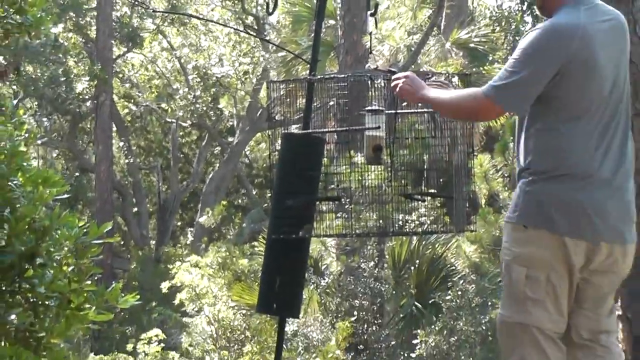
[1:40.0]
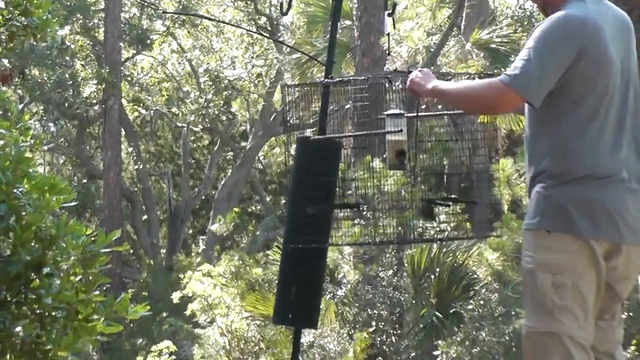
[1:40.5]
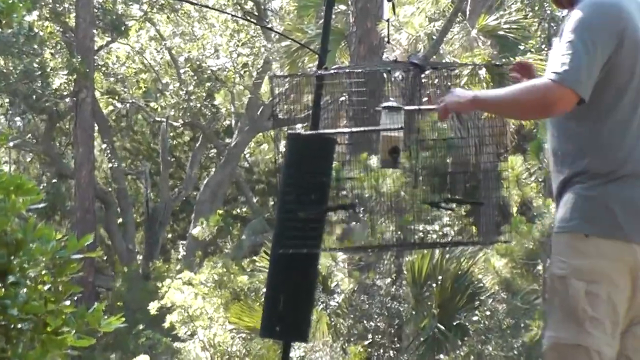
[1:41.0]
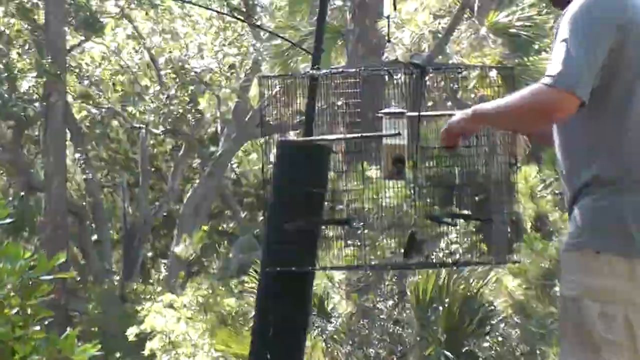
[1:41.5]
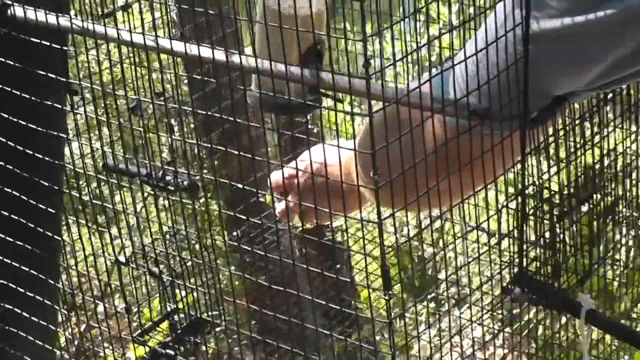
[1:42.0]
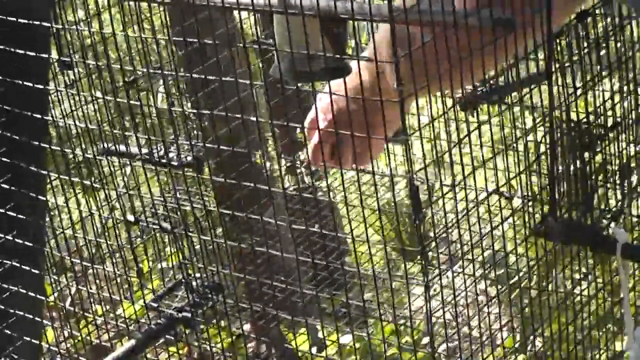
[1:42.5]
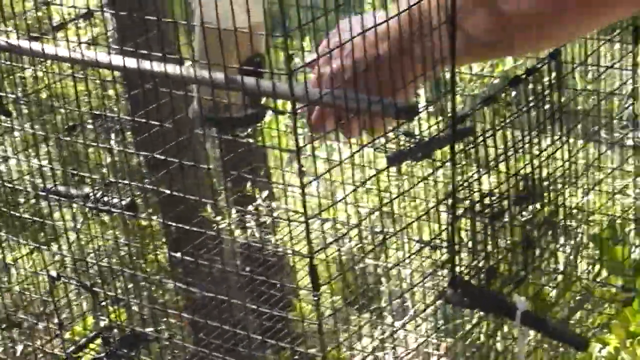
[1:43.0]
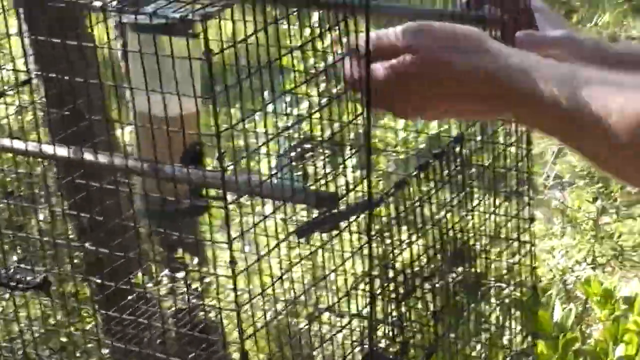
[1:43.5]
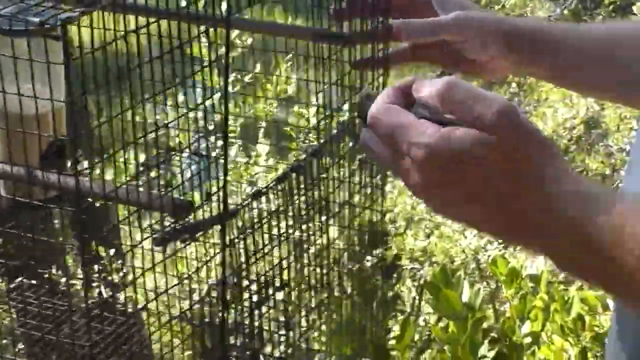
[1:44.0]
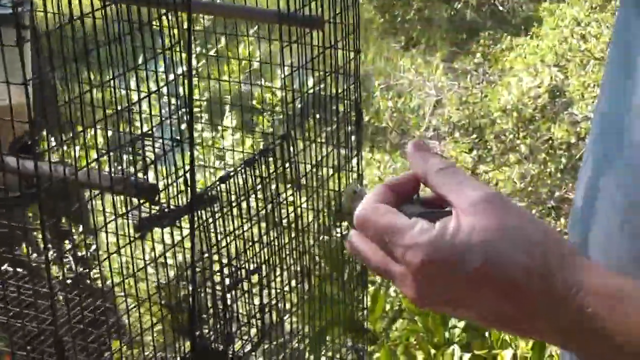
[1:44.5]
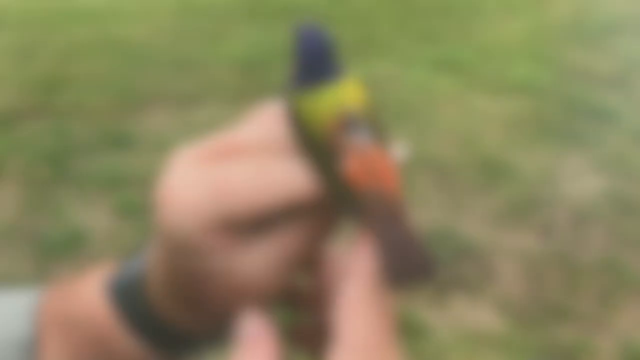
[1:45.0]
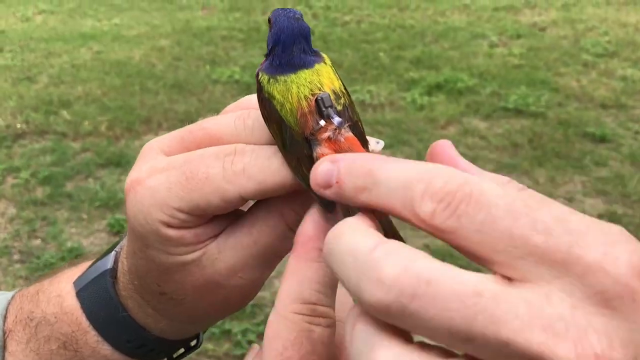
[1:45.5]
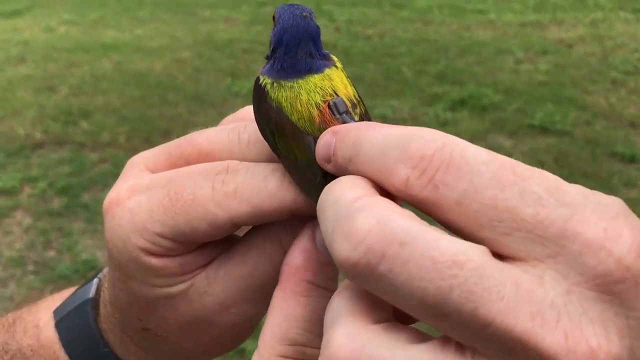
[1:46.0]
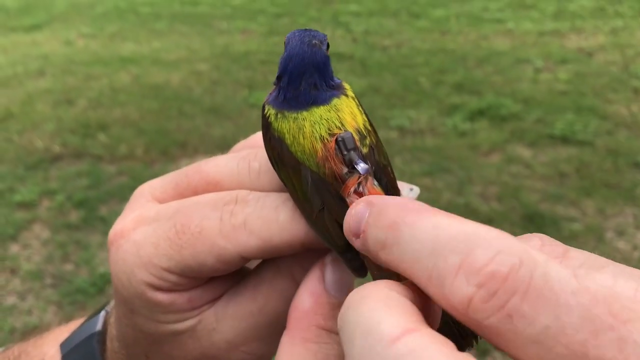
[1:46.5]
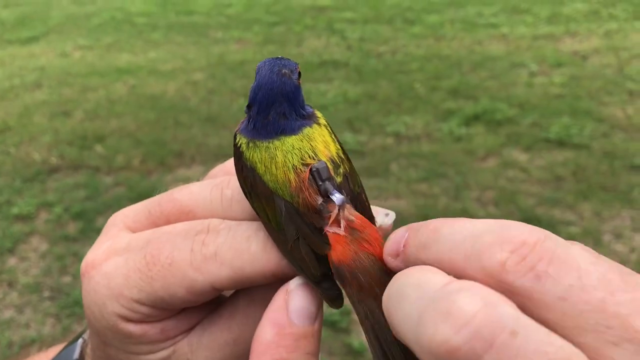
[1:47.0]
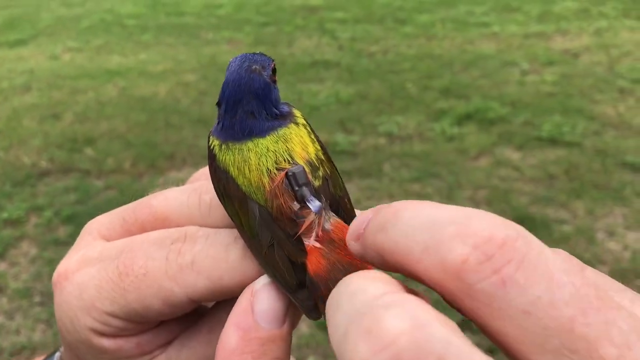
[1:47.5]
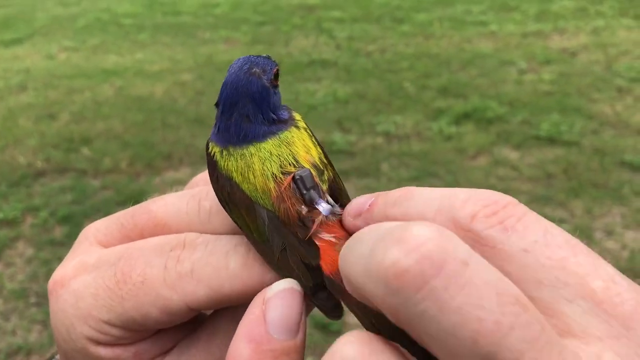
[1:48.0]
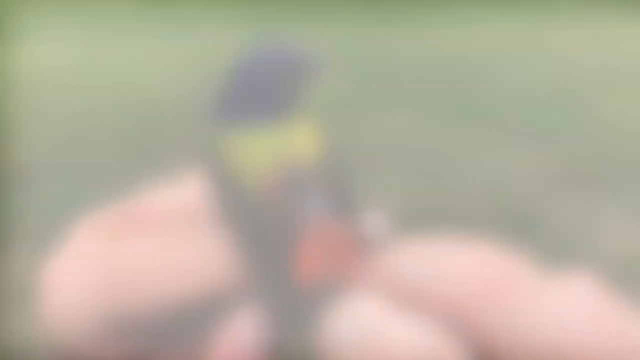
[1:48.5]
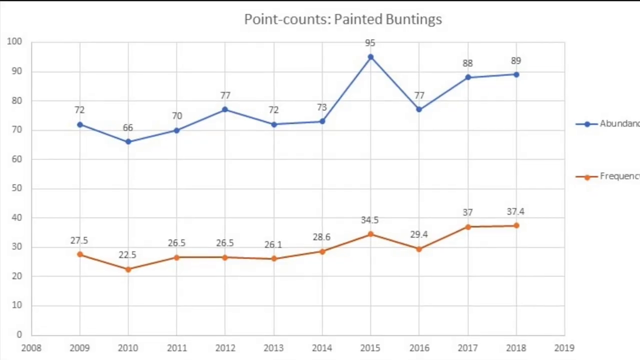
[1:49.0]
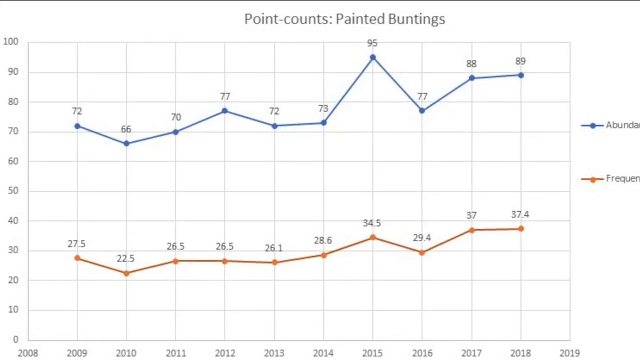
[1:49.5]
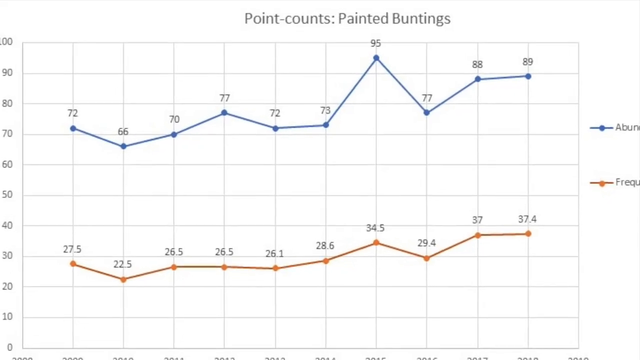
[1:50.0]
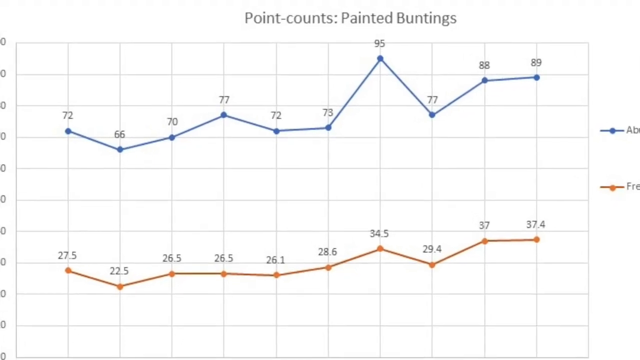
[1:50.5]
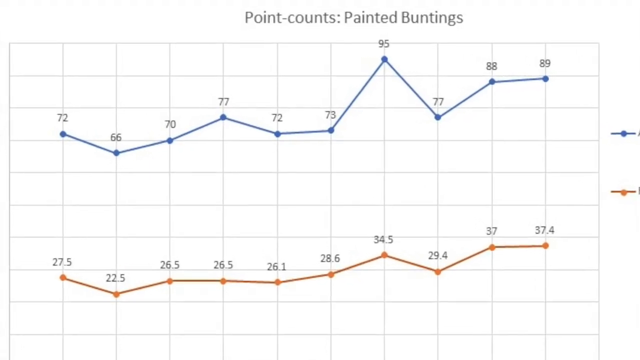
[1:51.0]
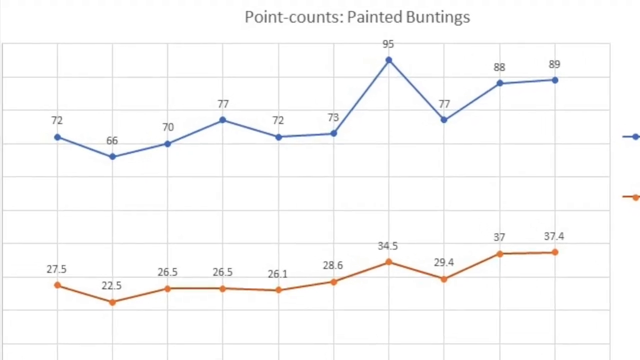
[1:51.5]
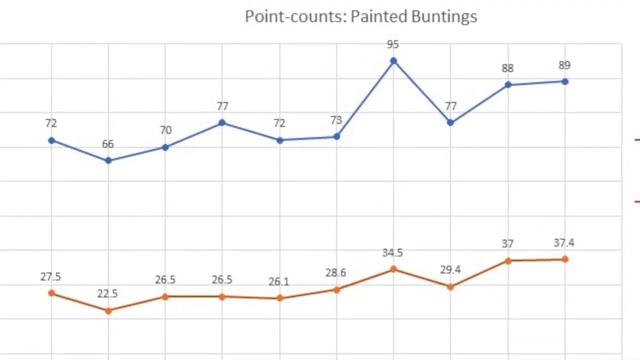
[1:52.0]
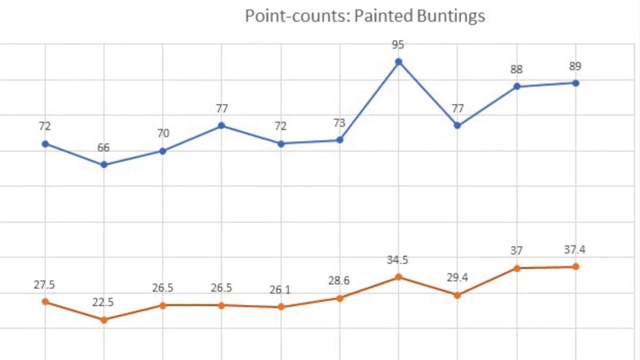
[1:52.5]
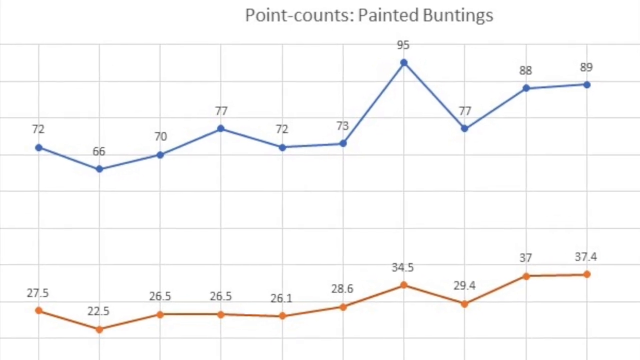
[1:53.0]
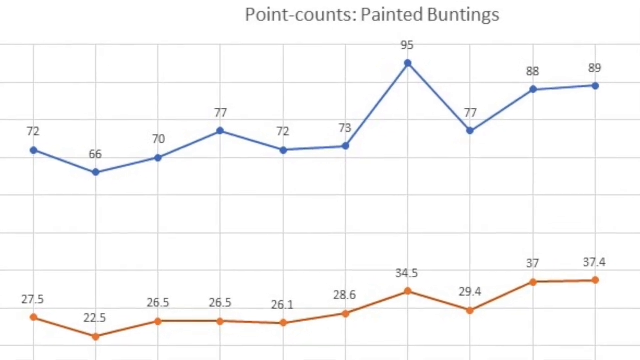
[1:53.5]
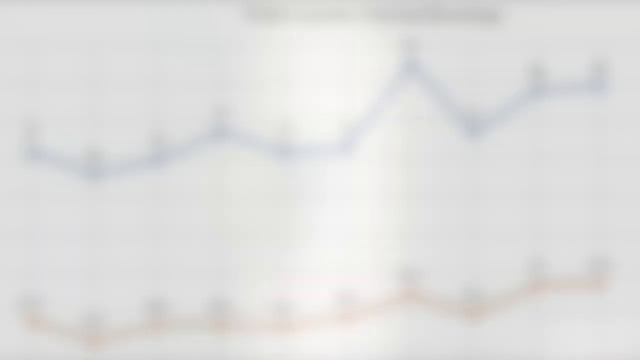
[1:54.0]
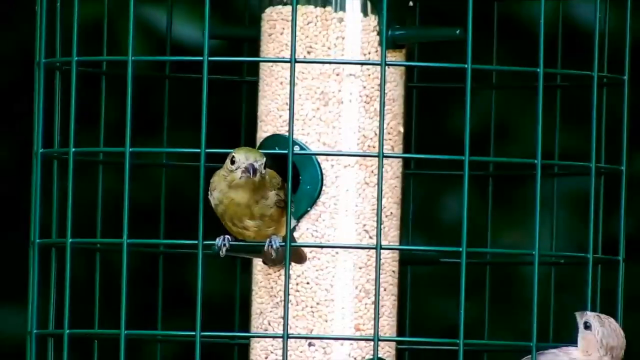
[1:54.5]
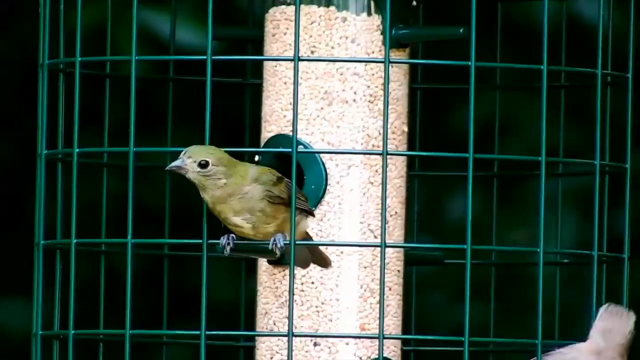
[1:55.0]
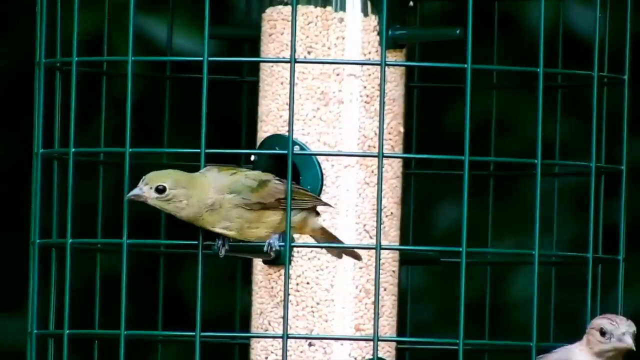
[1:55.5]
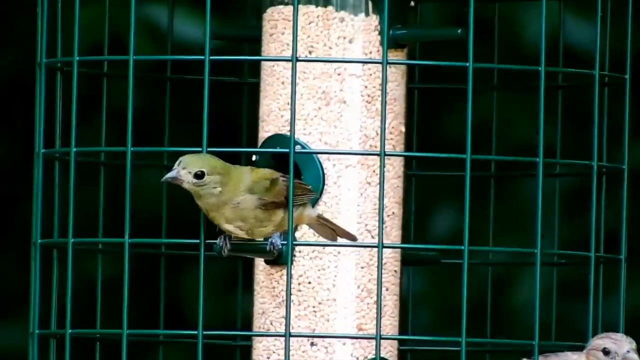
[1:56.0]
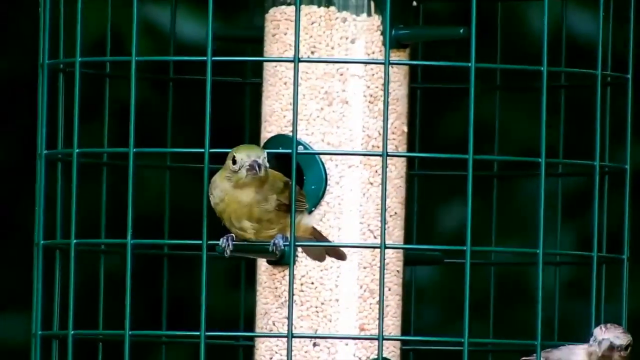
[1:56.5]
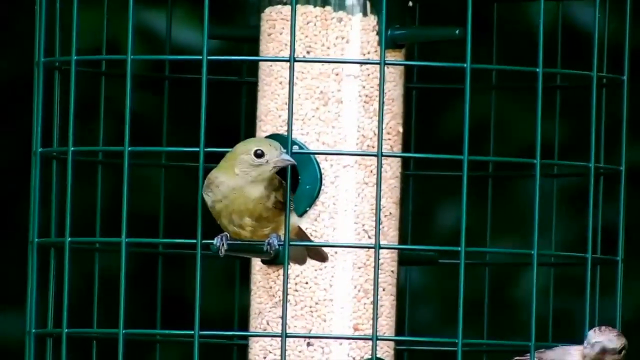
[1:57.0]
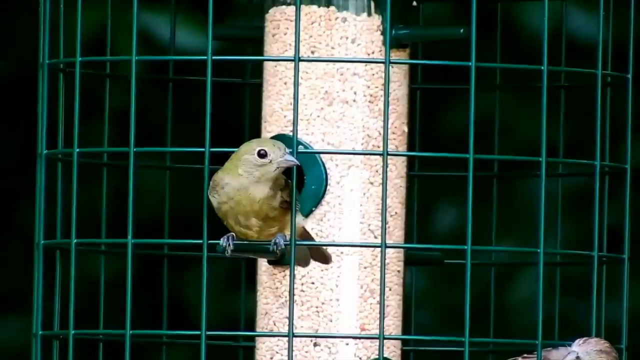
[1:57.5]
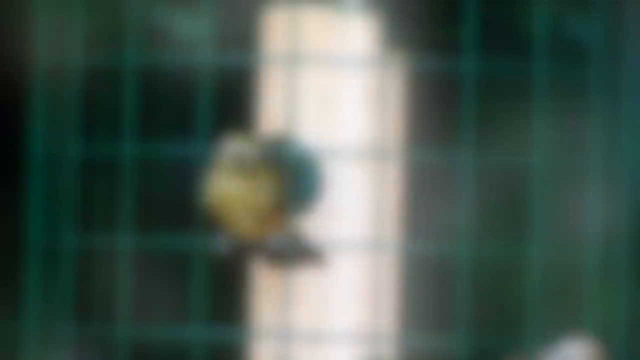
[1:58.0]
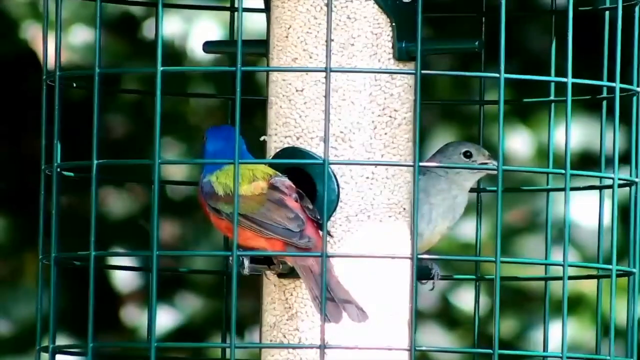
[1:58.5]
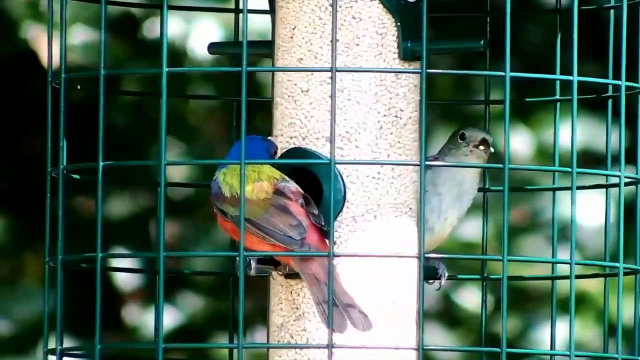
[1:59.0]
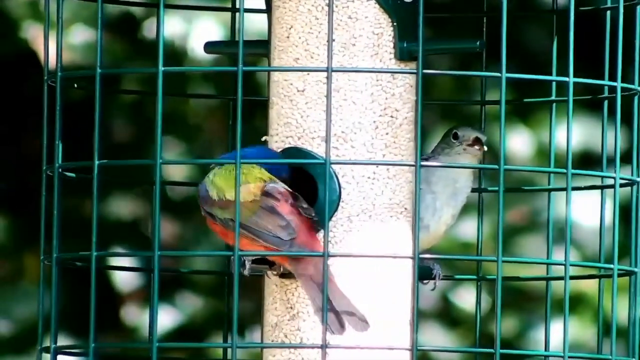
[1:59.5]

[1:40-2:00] An outdoor bird feeder with a cage over the top hangs from a tree in an outside wooded area. A man has walked up to the feeder cage and has his hands on the top. A green bird flies around trying to get into the feeder. The man opens a door, puts his hand inside the feeder and pulls out a bird, a green one. In a separate shot, the man is with the bird with the blue head, yellow feathers on the back and blue and red wings; he strokes the bird's feathers and the black-brown attachment is visible. A table or graph then appears on a white background showing point counts for painted buntings. The camera focuses in on the movement counts; the highest figure is 95. Then the green bird is outside the caged feeder, looking out to the camera. Inside the feeder are a bird with a blue head, green feathers on the back and an orange body, and another green bird, both sitting on different perches on either side of the feeder.